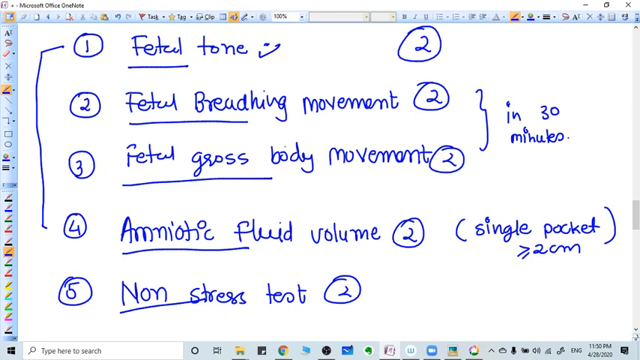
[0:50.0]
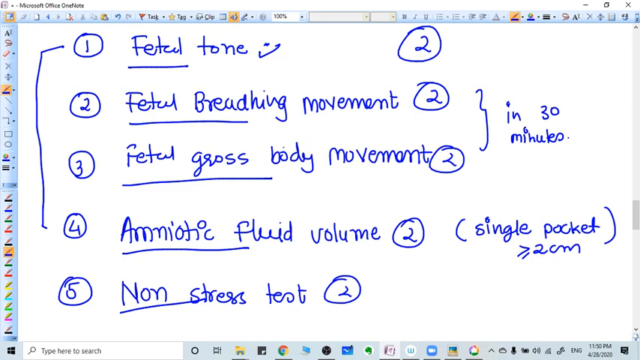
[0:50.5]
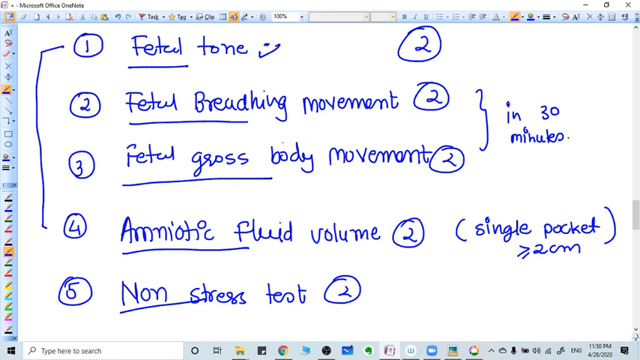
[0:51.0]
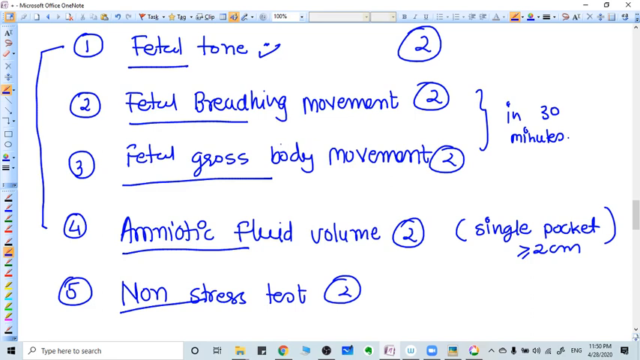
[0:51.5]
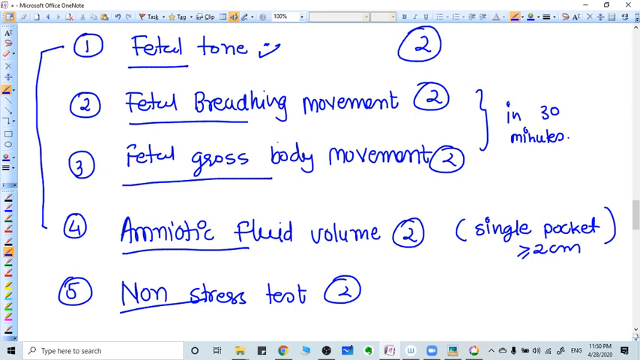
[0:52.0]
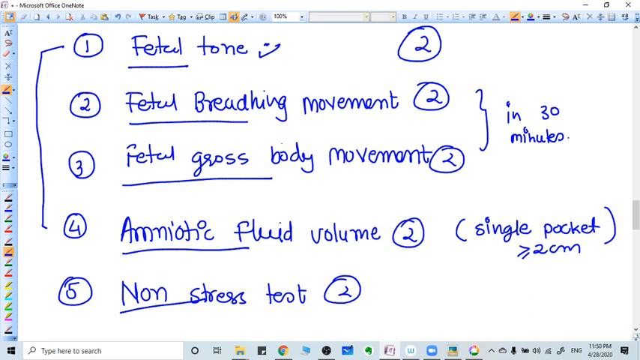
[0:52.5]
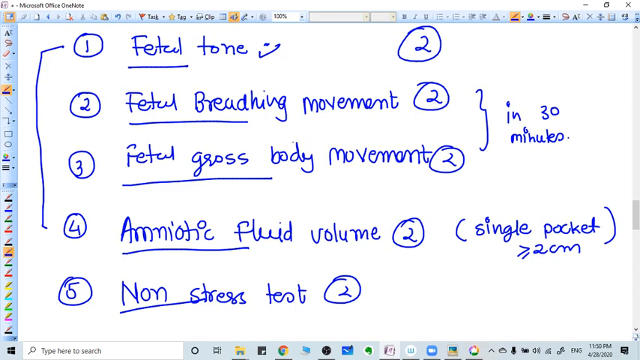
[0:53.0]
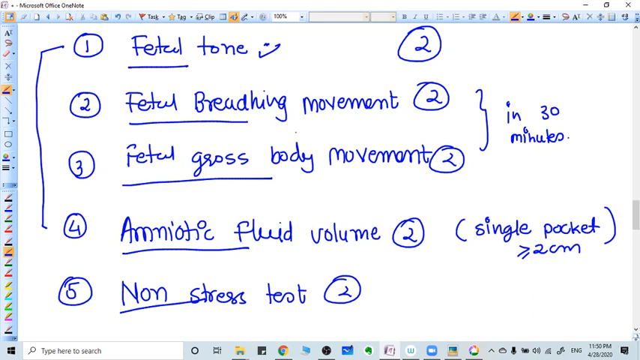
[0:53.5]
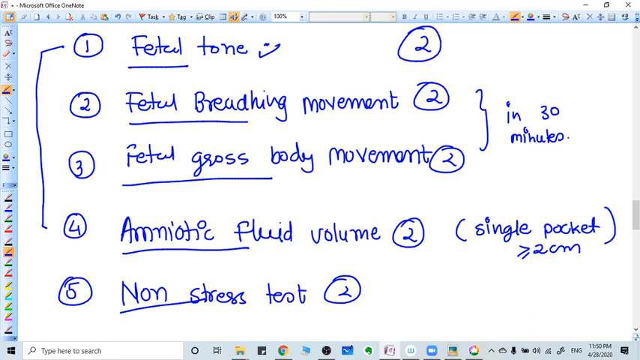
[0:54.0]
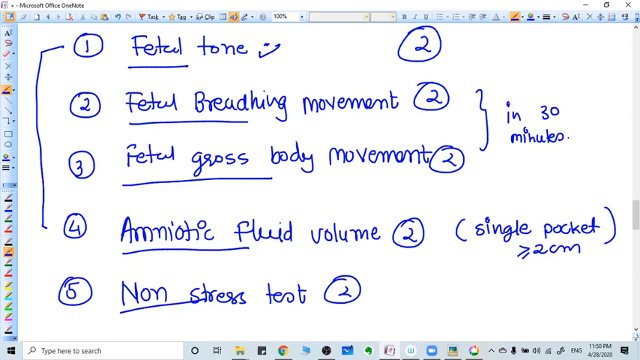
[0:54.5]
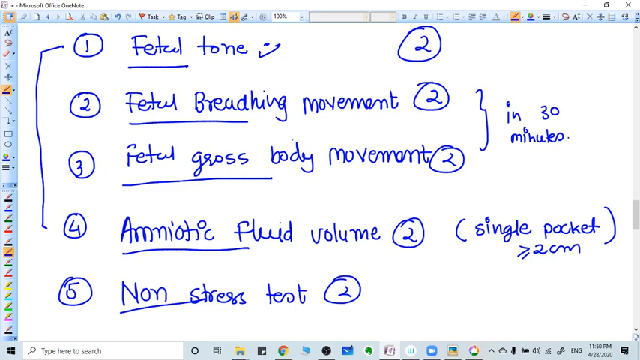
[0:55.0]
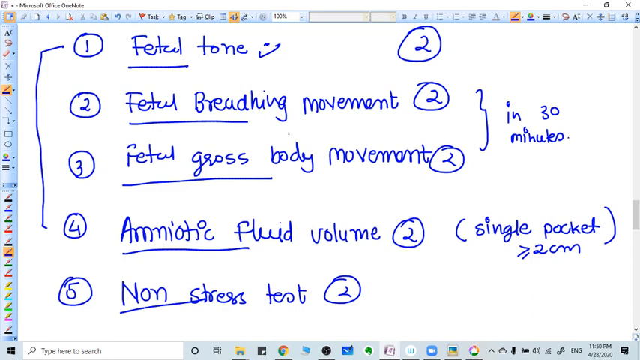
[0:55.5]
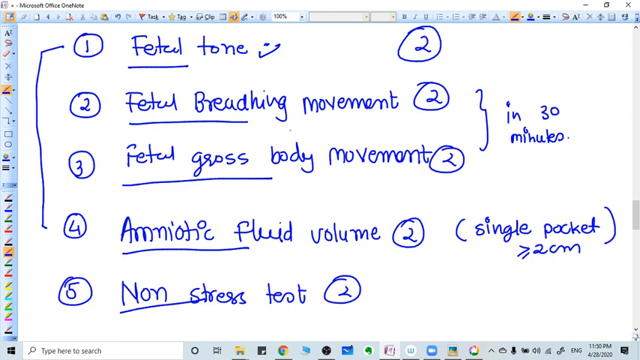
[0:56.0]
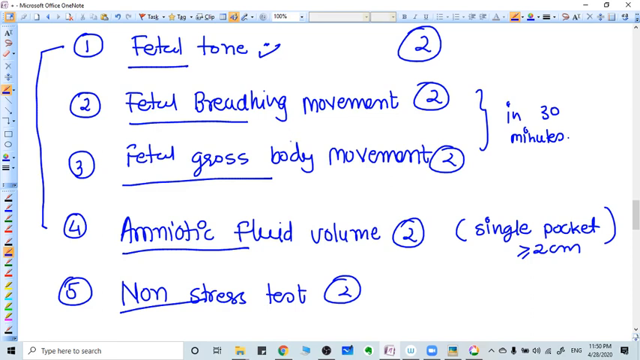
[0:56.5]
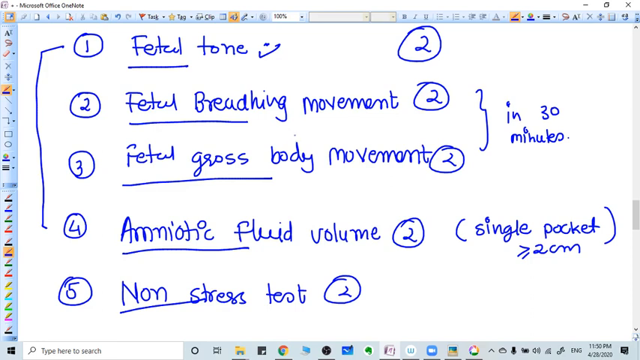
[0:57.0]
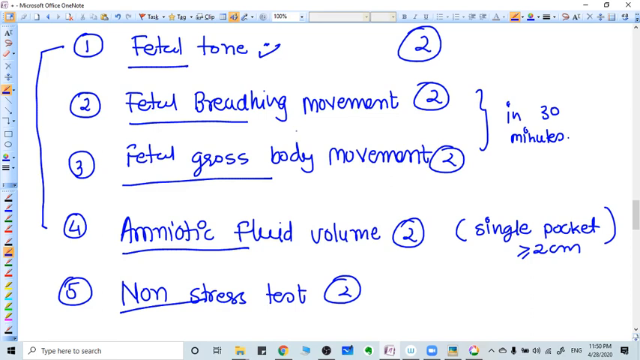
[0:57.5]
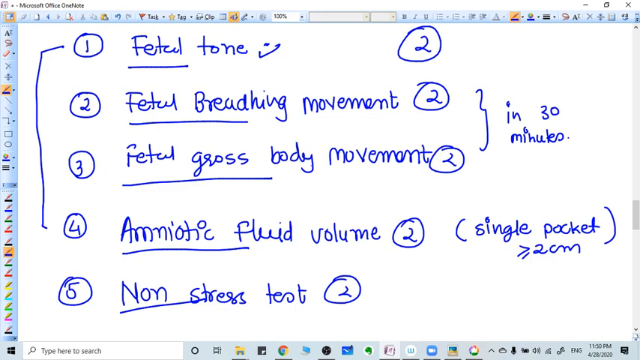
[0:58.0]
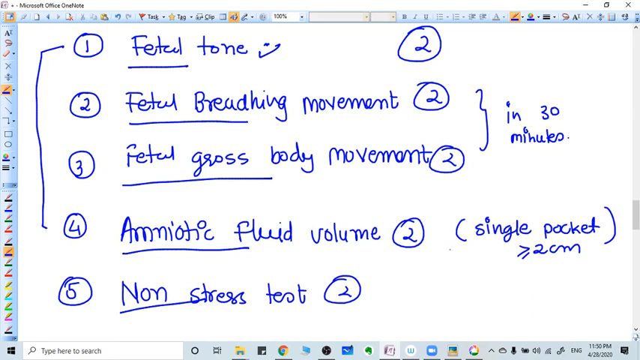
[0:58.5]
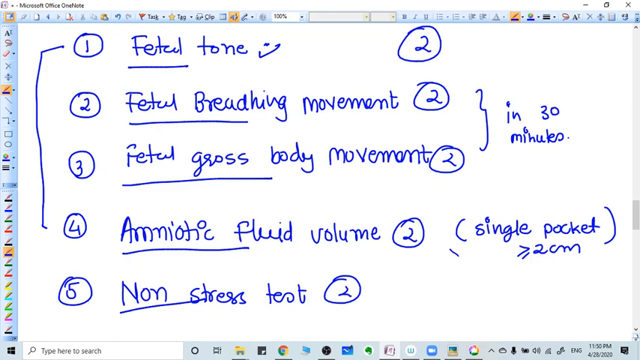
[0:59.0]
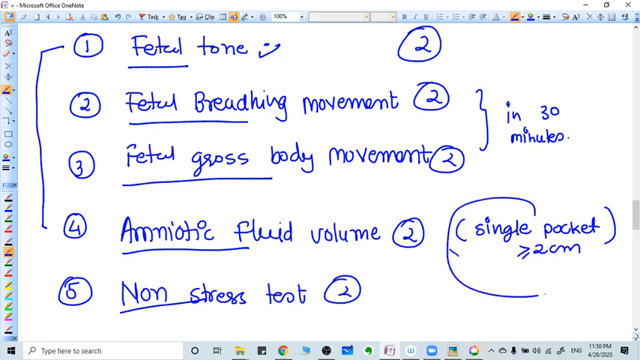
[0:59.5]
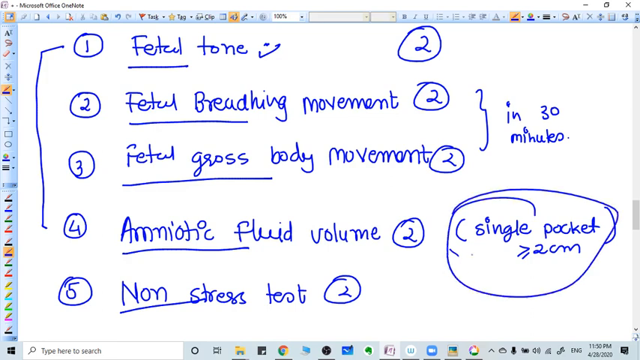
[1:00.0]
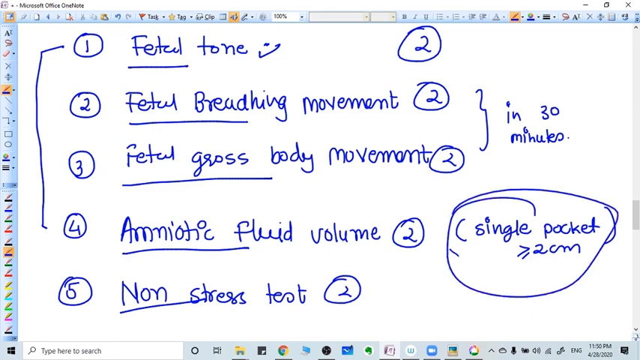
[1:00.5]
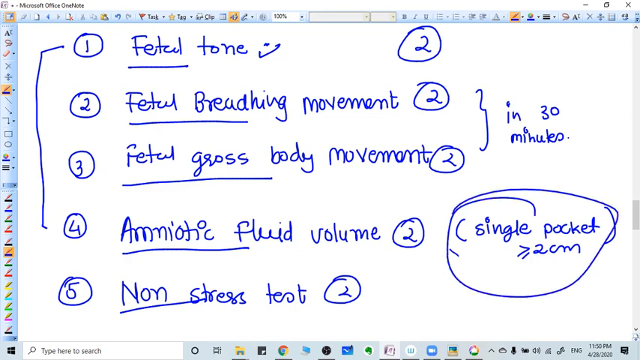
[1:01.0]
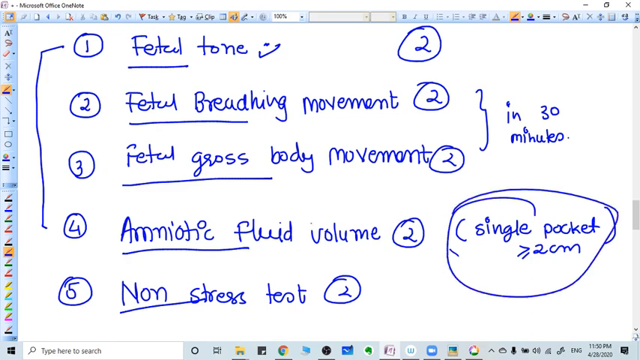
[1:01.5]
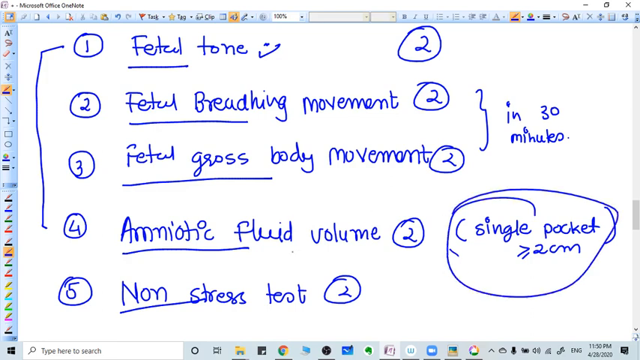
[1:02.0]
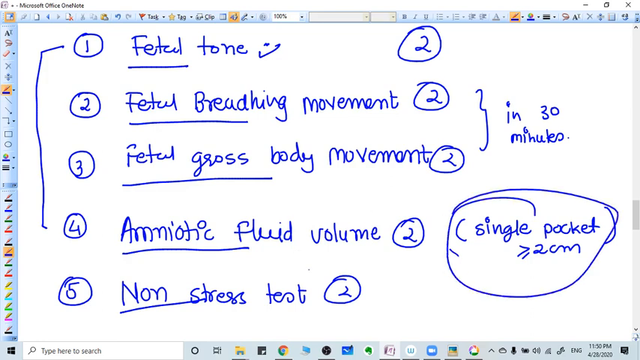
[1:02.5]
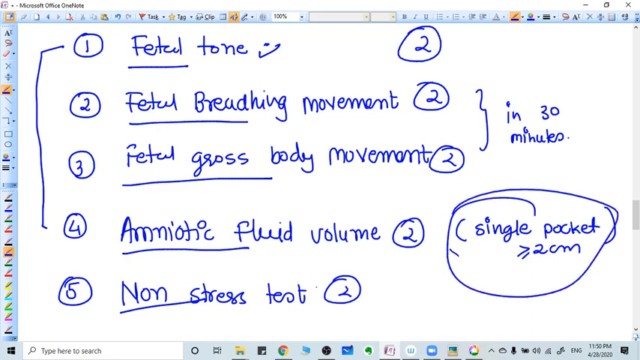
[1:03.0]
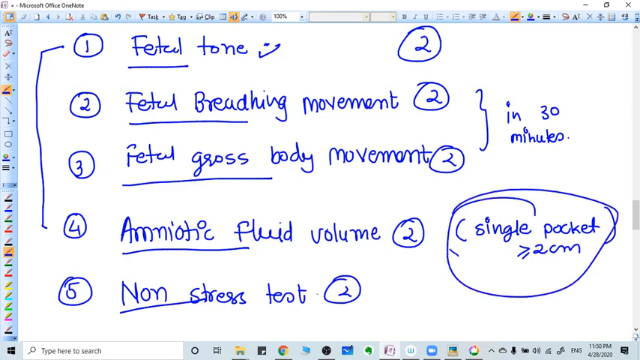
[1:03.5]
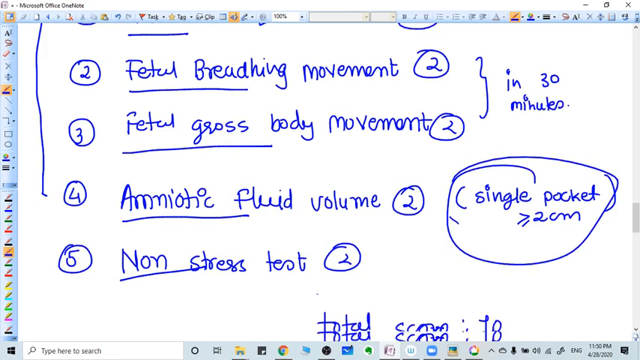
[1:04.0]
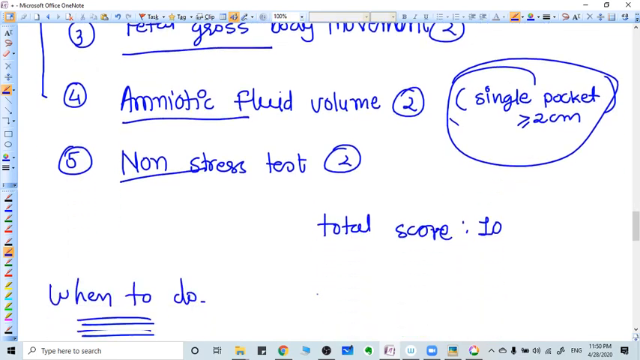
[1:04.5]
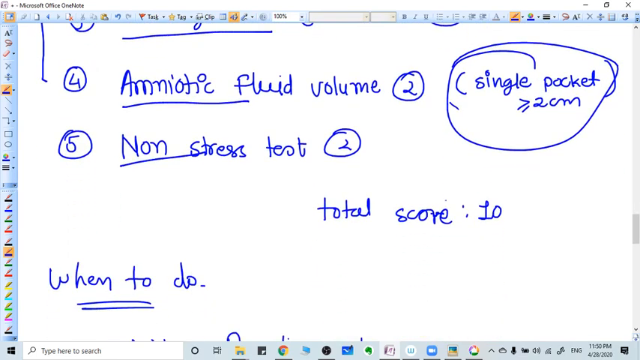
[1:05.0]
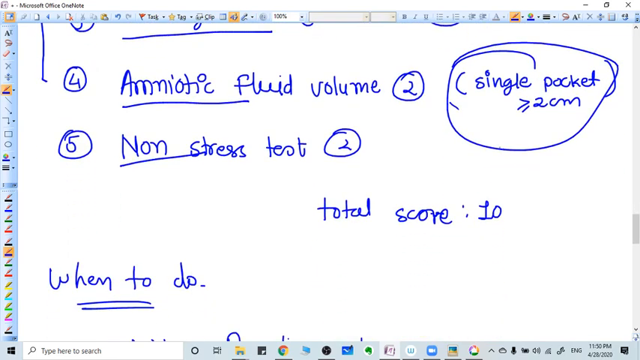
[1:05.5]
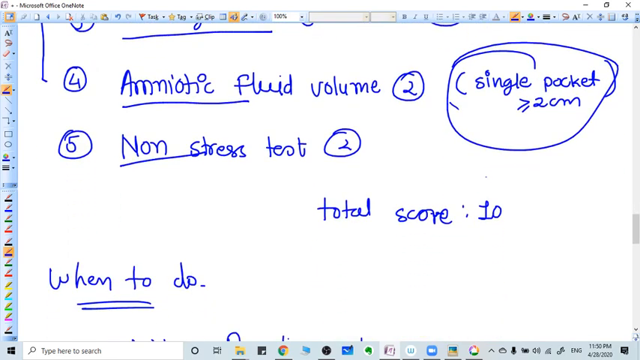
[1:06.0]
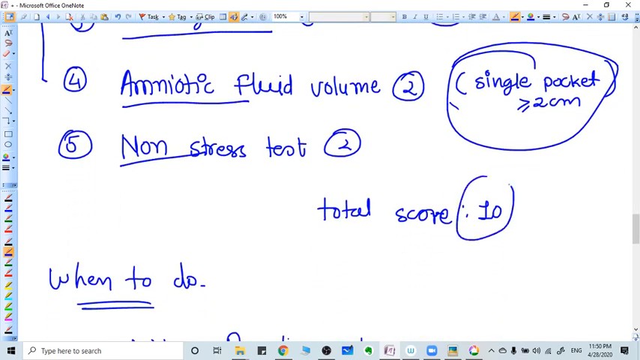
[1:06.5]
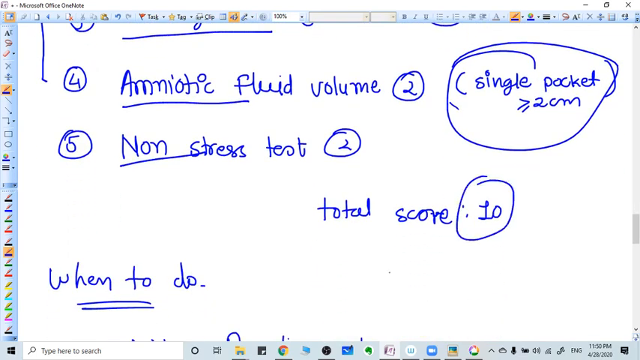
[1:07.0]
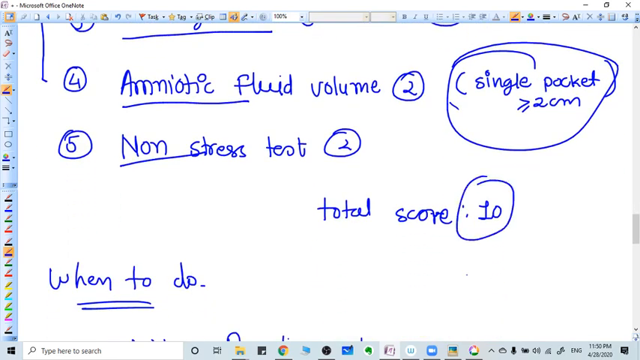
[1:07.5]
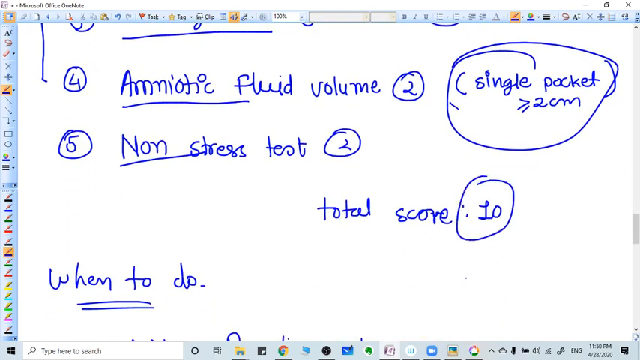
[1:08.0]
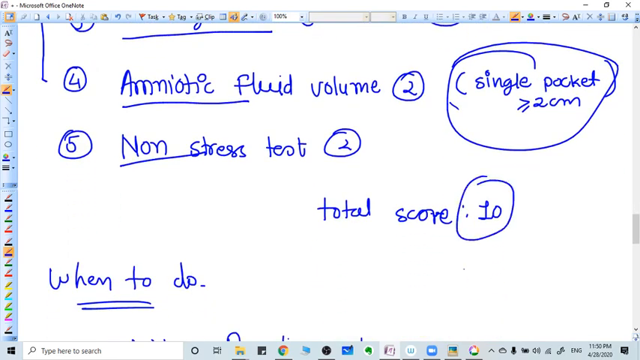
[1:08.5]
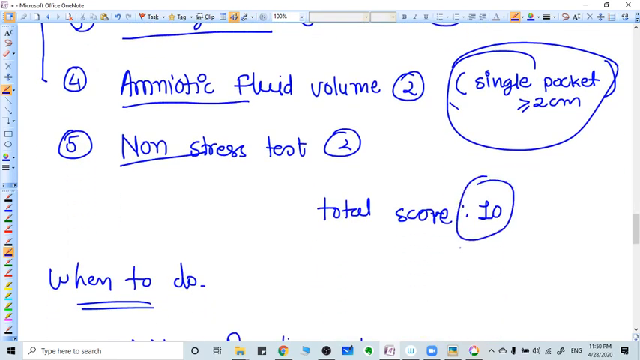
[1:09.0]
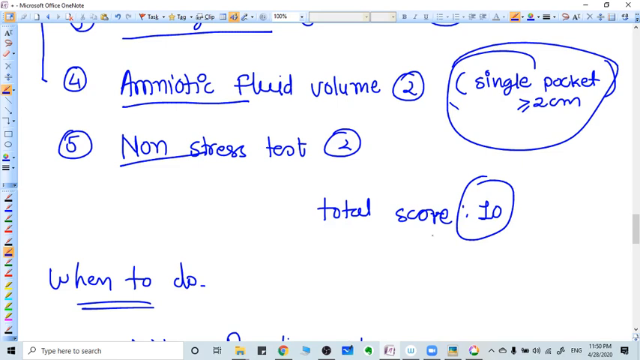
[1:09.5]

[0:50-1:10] For the first six to eight seconds the screen barely changes: items one through five are still visible, written in blue with the new underlines. The person then underlines the words "single pocket two centimeters" toward the bottom right-hand side and circles that part. The page then scrolls down somewhat. A very small cursor is visible. Under number five it says "total score 10," and in the bottom left-hand corner it says "when to do" with two underlines beneath it. The 10 of the total score is circled at the very end. All of the icons remain visible, and nothing else changes apart from the circles.